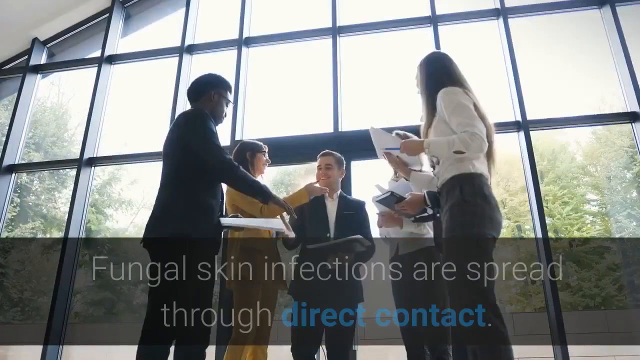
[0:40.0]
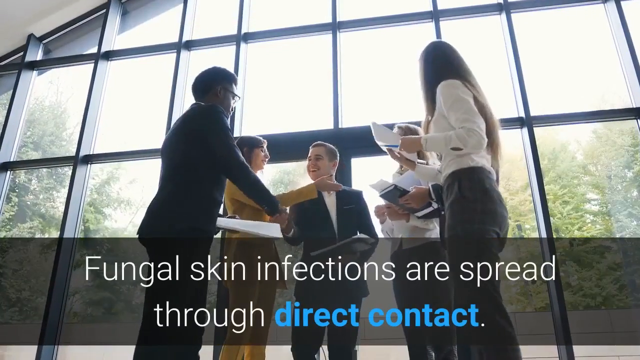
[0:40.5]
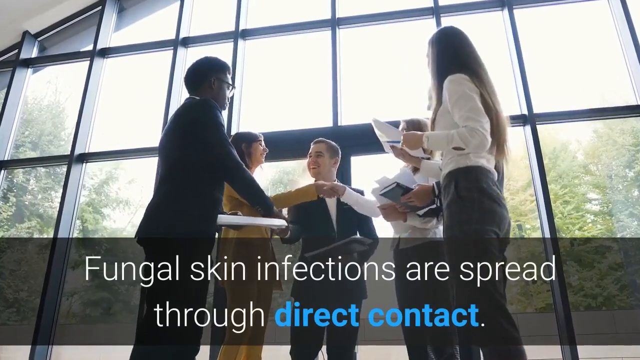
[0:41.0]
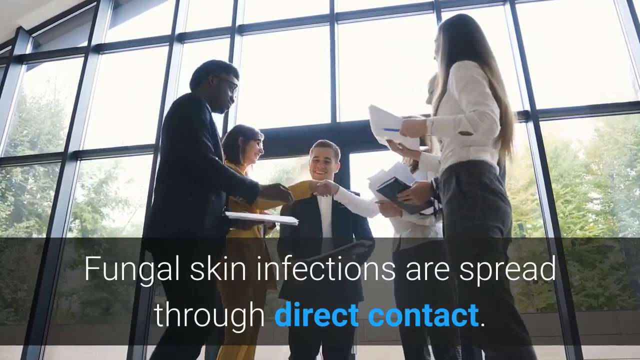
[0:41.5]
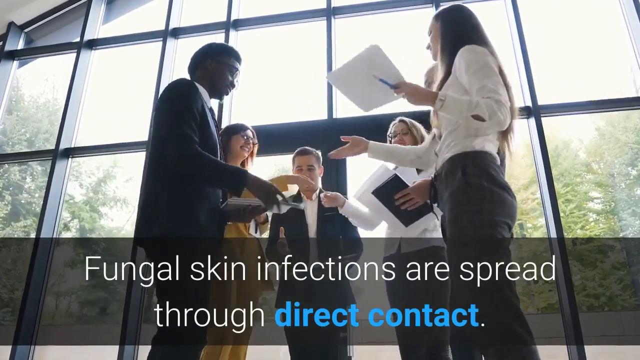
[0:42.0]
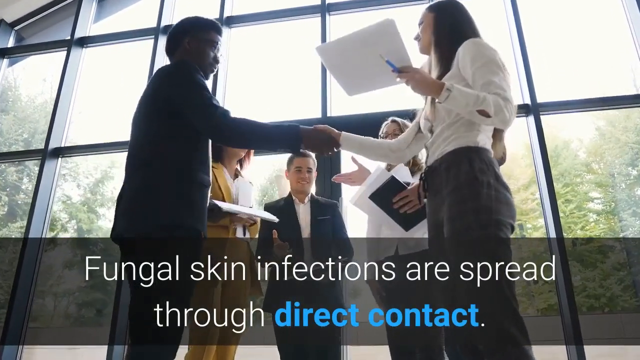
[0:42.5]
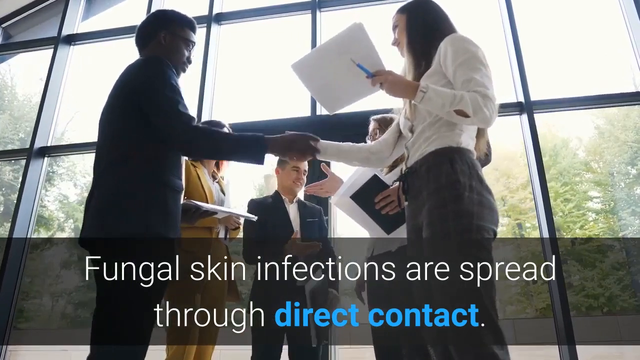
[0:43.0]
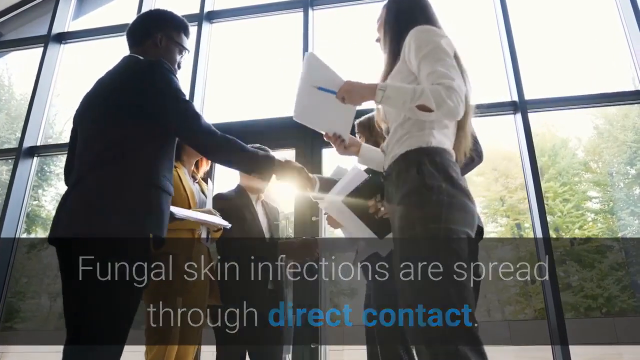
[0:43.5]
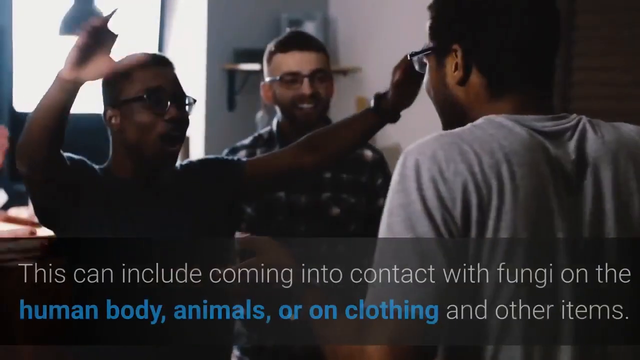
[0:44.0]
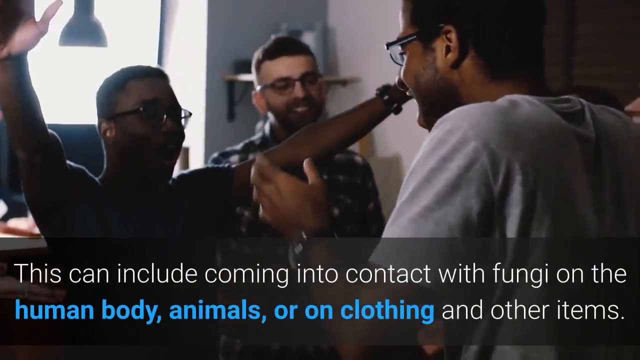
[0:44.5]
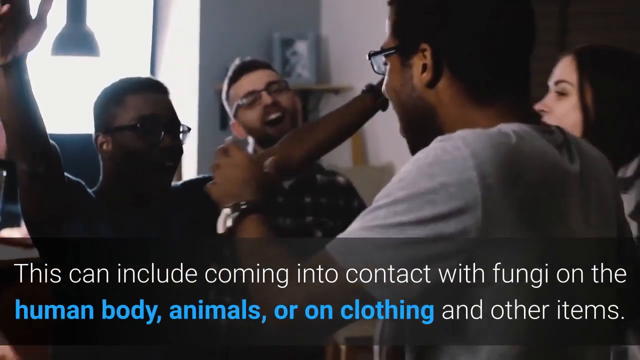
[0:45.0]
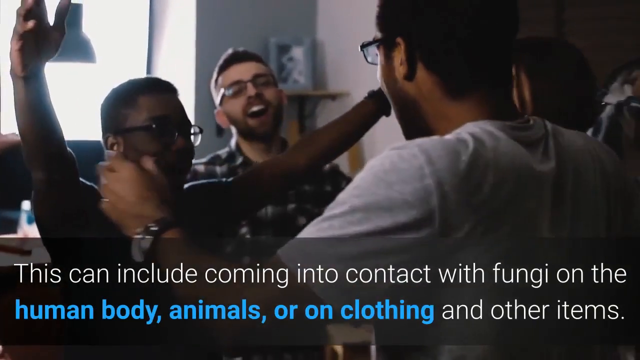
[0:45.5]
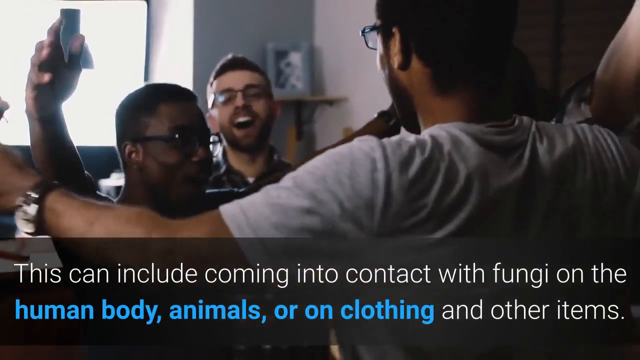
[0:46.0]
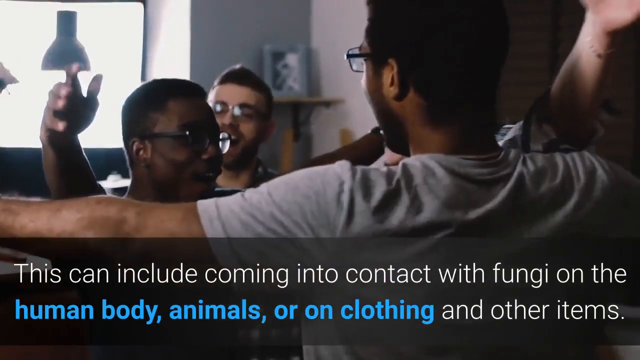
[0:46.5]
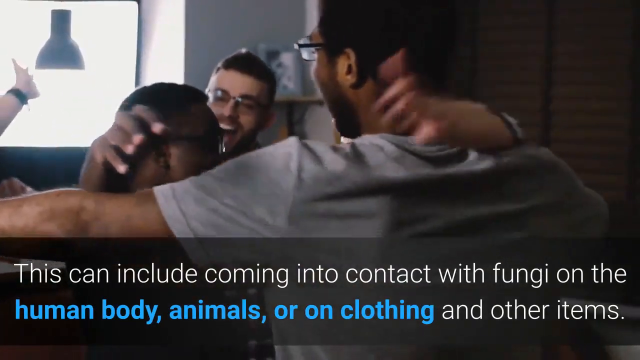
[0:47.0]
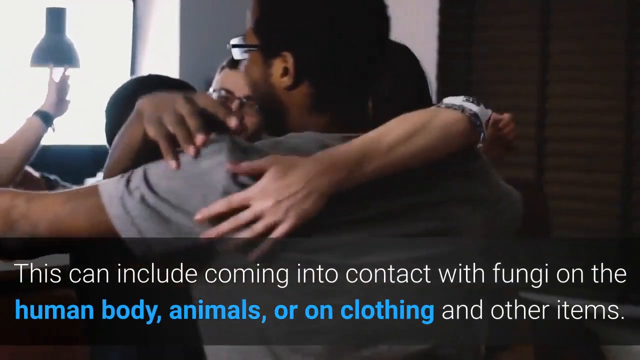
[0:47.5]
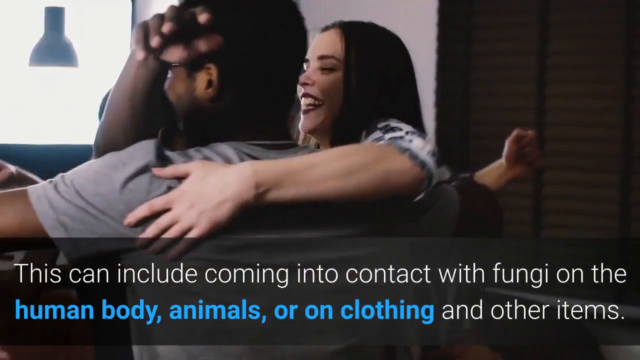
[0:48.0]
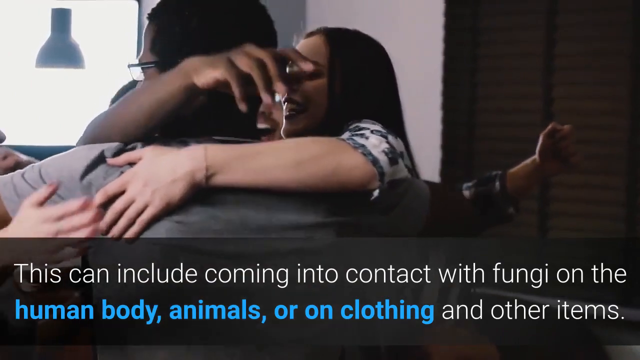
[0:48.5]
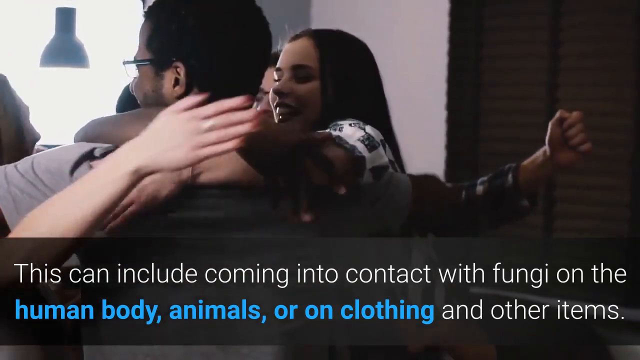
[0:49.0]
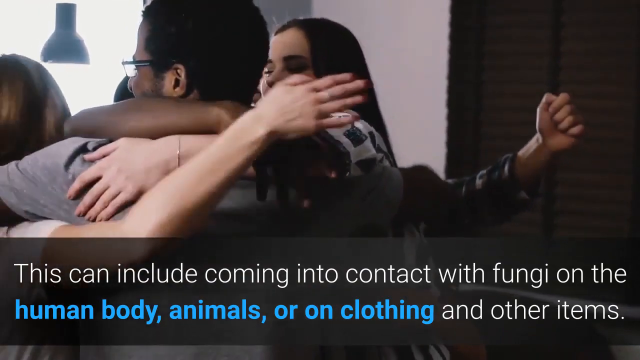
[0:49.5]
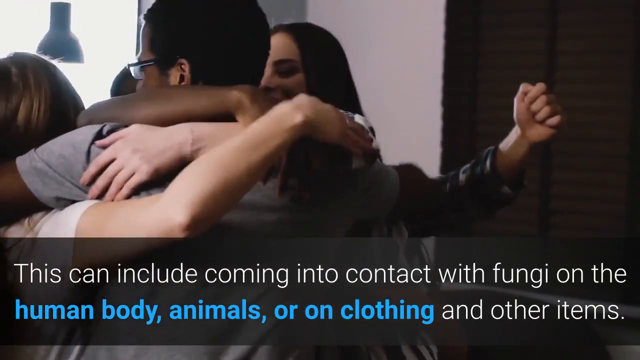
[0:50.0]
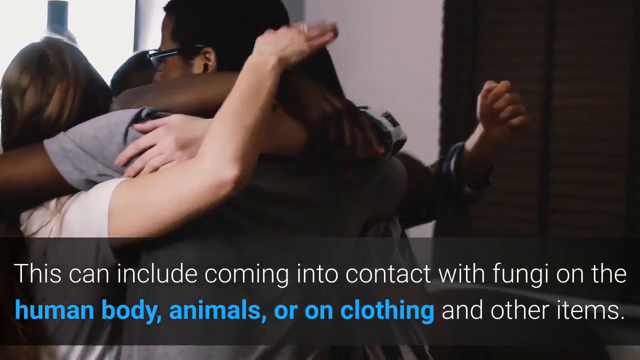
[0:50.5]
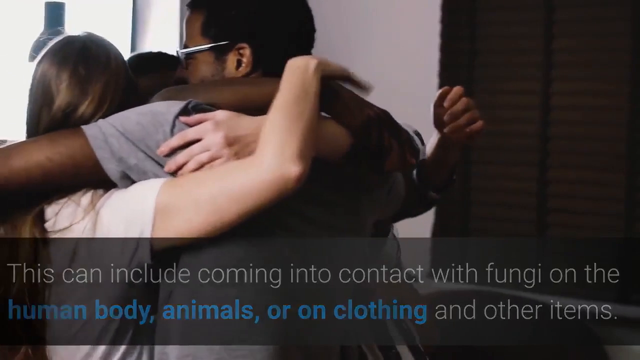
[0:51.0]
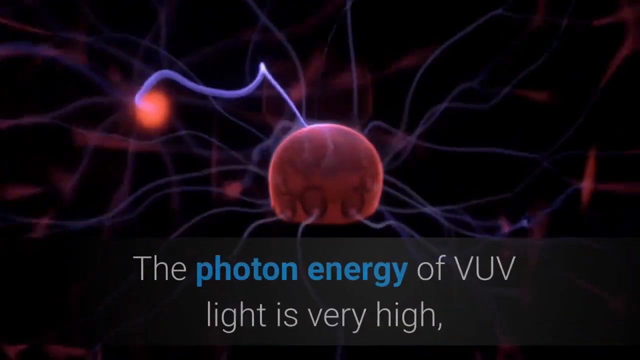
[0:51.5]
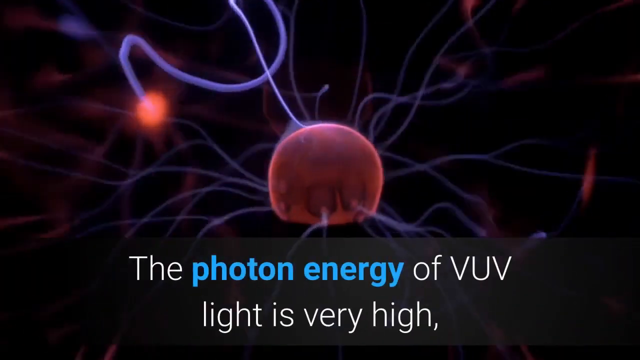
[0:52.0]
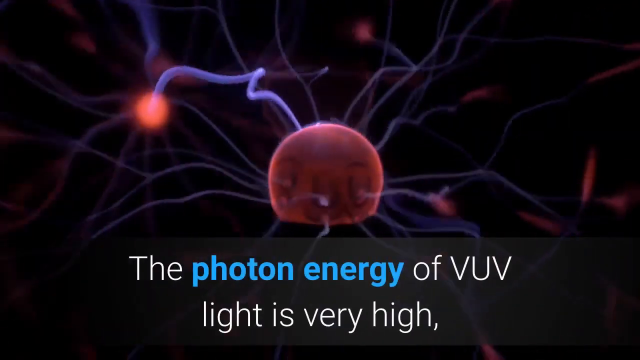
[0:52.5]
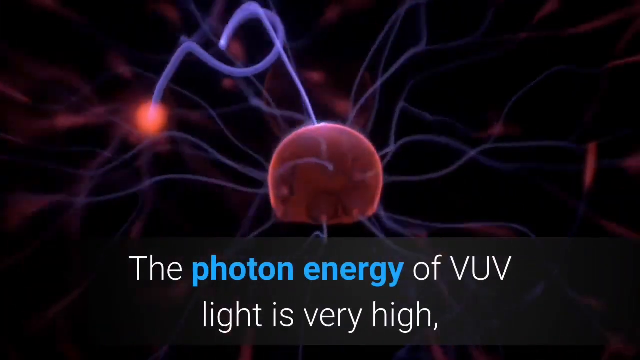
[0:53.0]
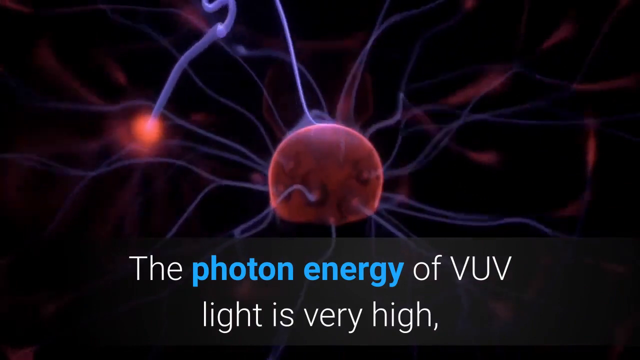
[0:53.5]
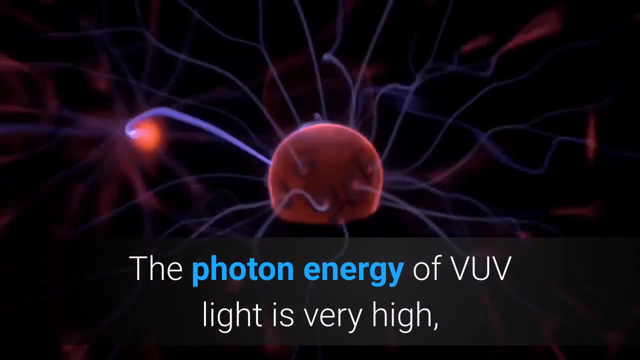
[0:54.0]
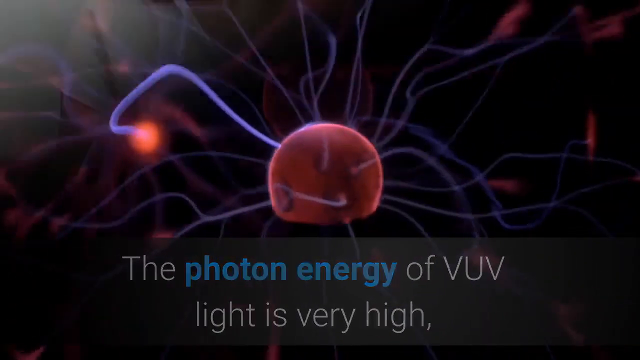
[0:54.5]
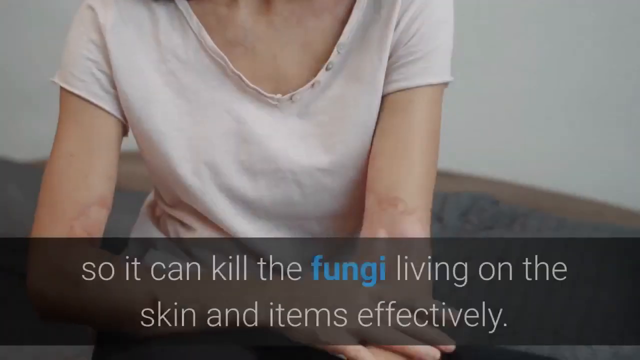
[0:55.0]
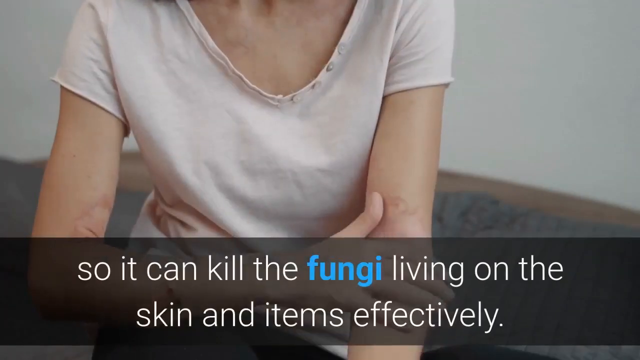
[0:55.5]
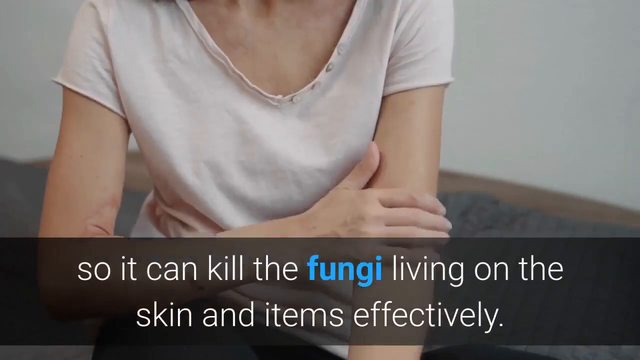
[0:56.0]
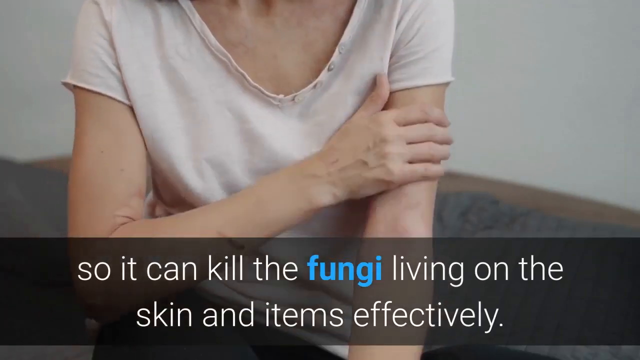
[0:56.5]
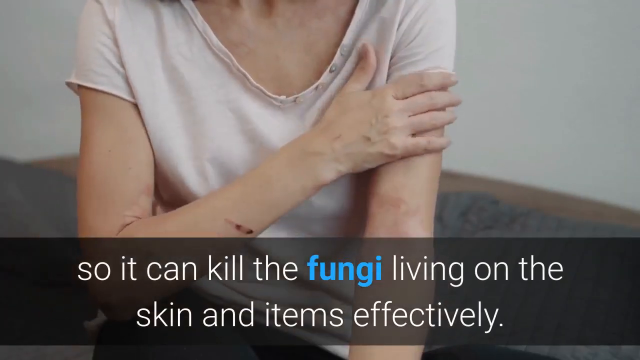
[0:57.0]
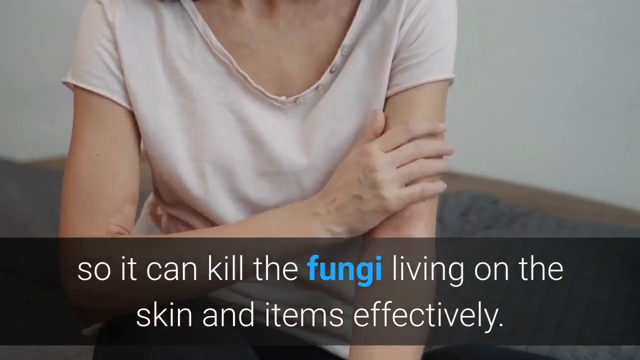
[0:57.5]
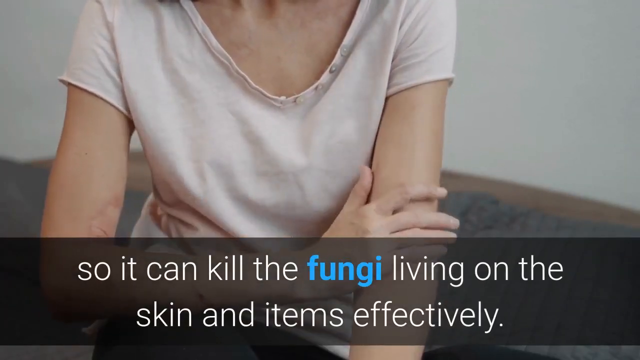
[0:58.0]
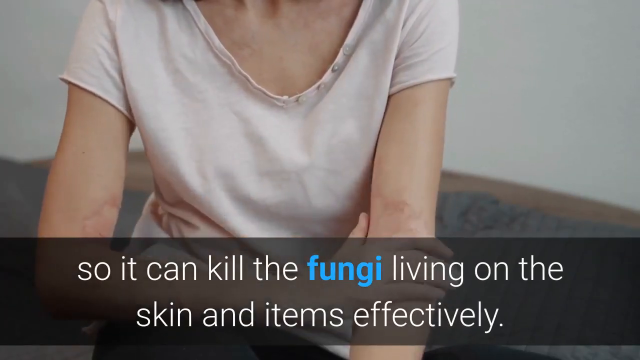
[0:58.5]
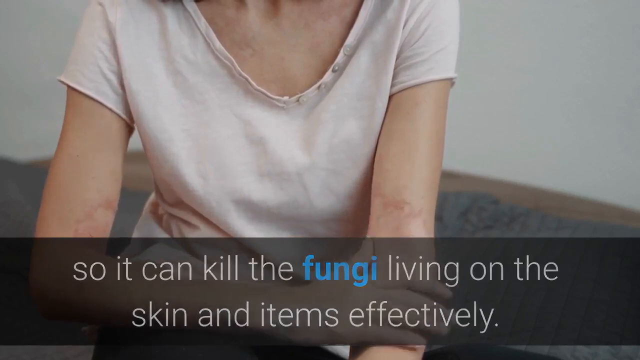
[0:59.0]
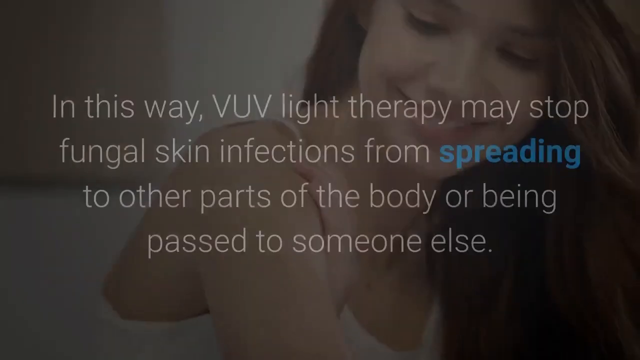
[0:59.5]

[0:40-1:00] A new video shows five people standing in a half circle. On the left is a man of African descent in a suit. Going clockwise, there is a brown-haired woman in a yellow shirt and a skirt, next to her a man in a white button-down and a suit jacket, and then two women in white tops and dark pants. The text at the bottom reads "fungal skin infections are spread through direct contact", with "direct contact" in blue. The first woman in the white shirt and the woman in the yellow shirt shake hands, as do the two men, and then they go around the circle shaking hands with each other. Next, a man of African descent wearing glasses and a dark shirt and another man of African descent wearing glasses and white excitedly embrace. They are joined by two people from the background, a white woman with long dark hair and a white man with short dark hair, and another person with Caucasian skin on the left appears to join the group hug. The text at the bottom reads "this can include coming into contact with fungi on the human body, animals, or on clothing and other items." A red circle then appears in the middle of the screen with several blue strands coming off it; they look kind of like the roots of a tree and float around as if electric. At the end of one strand, a small red circle appears to be glowing. The text reads "the photon energy of VUV light is very high." A new video shows a woman's chest from just below the neck to the waist. She wears an off-white V-neck t-shirt and rubs her left upper arm with her right hand, while the text below reads "so it can kill the fungi living on the skin and items effectively."